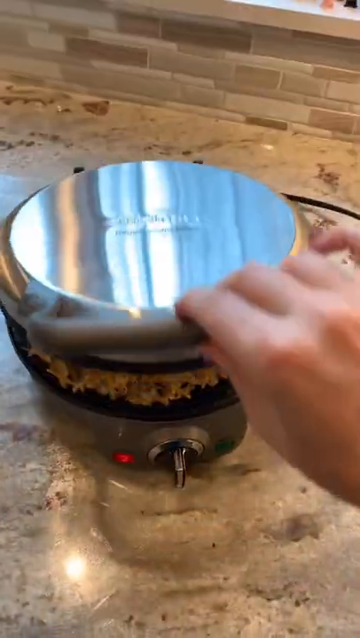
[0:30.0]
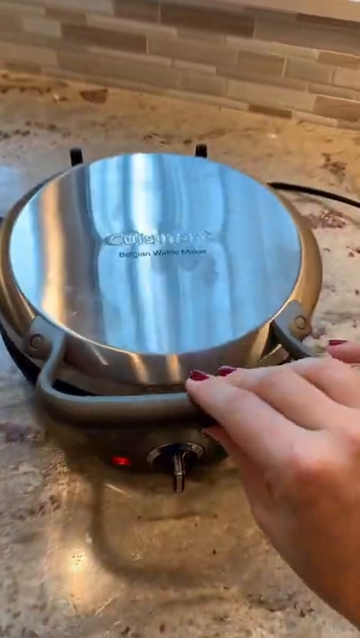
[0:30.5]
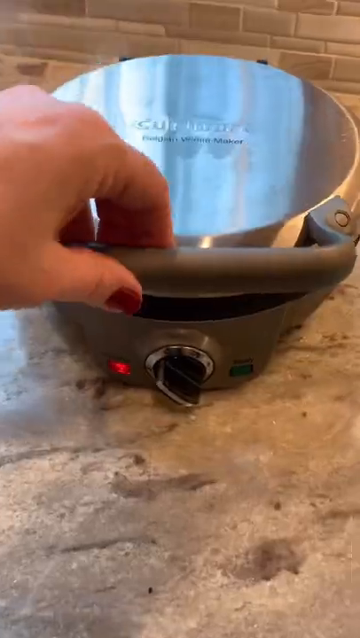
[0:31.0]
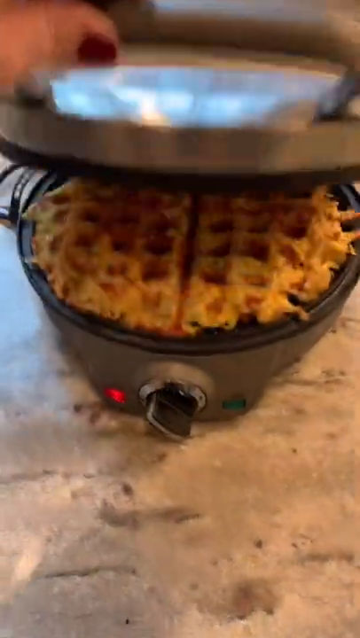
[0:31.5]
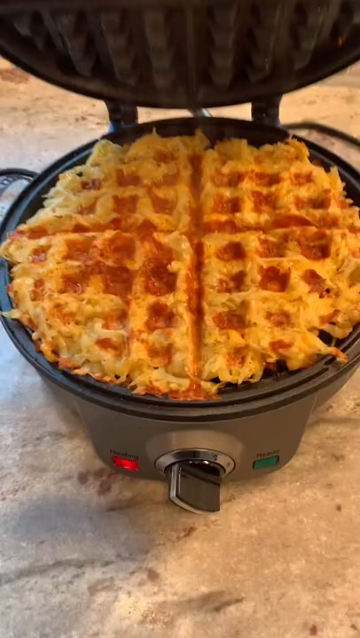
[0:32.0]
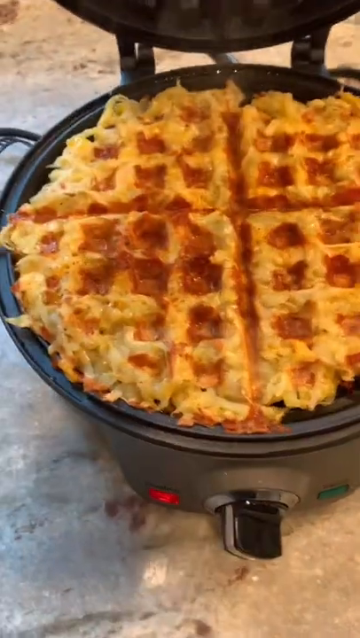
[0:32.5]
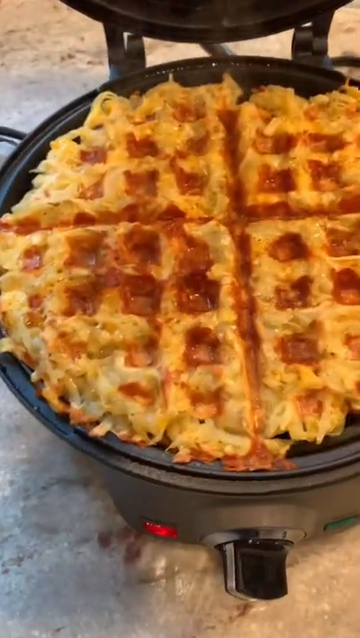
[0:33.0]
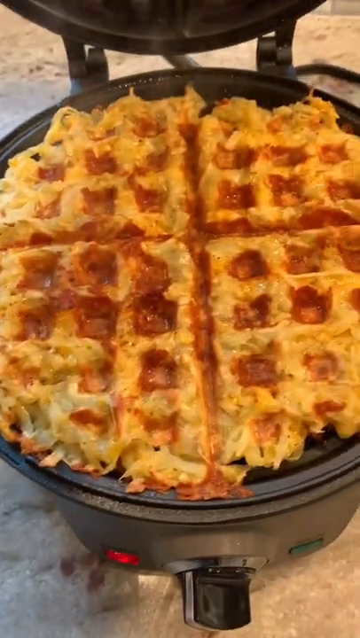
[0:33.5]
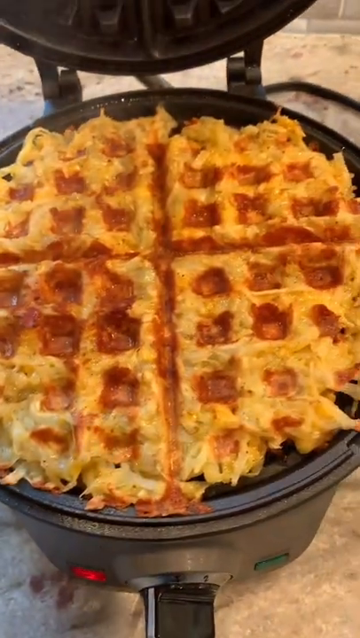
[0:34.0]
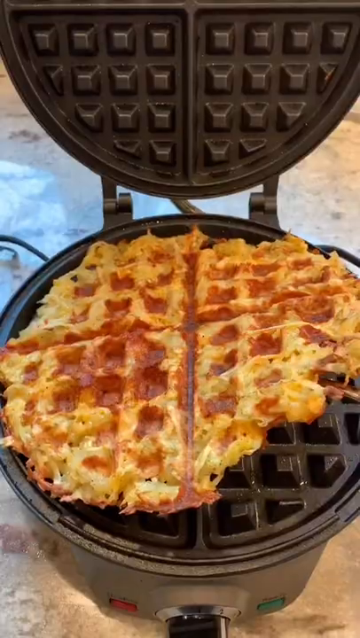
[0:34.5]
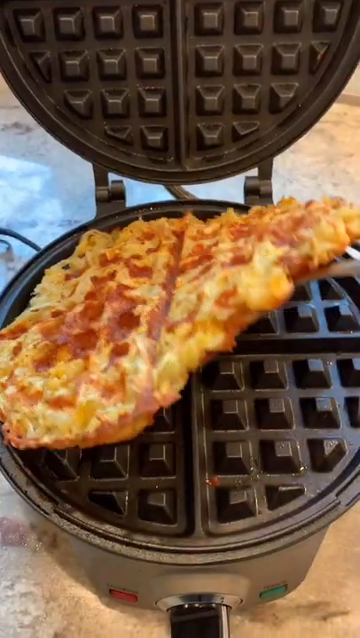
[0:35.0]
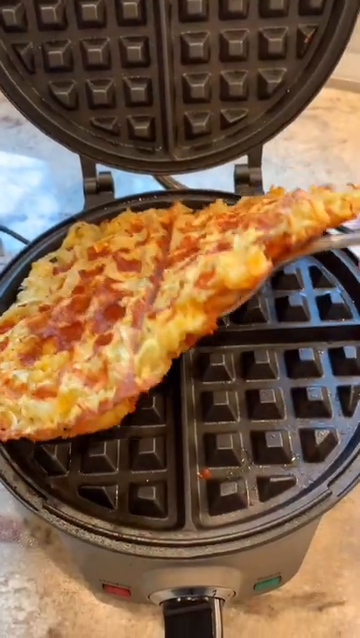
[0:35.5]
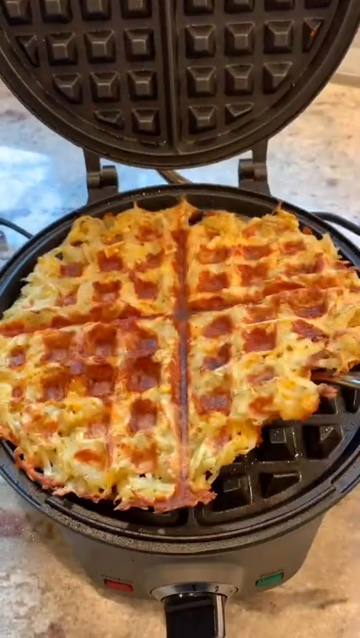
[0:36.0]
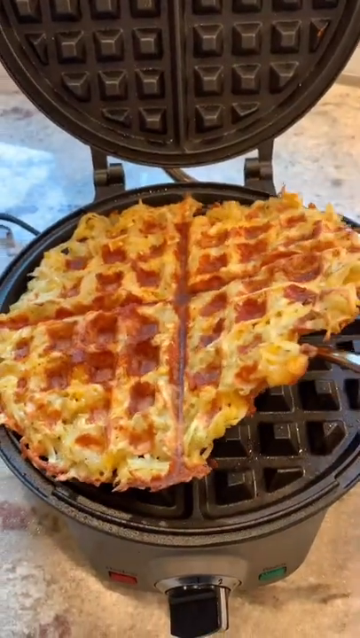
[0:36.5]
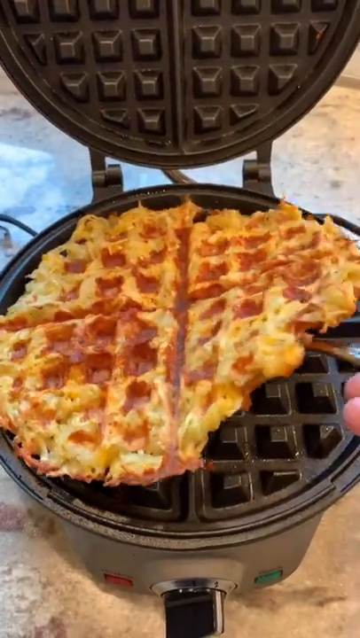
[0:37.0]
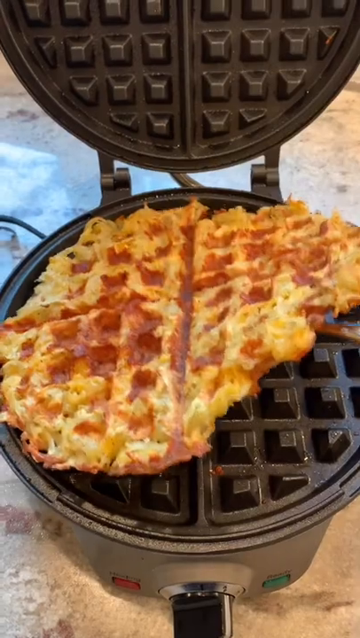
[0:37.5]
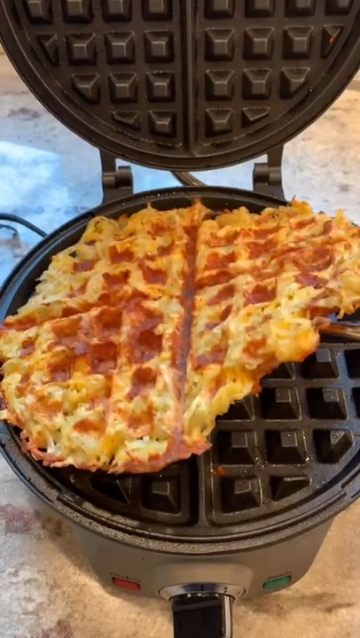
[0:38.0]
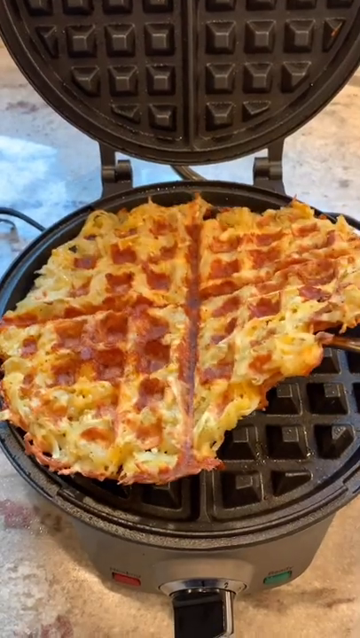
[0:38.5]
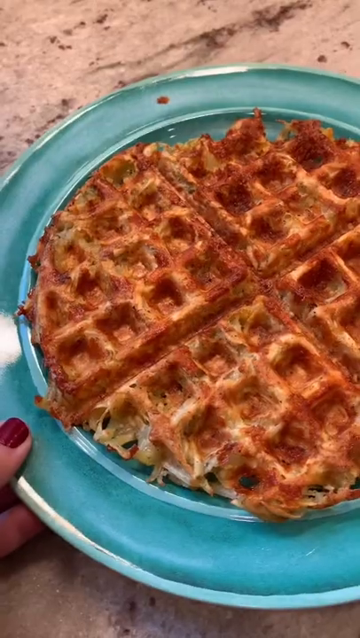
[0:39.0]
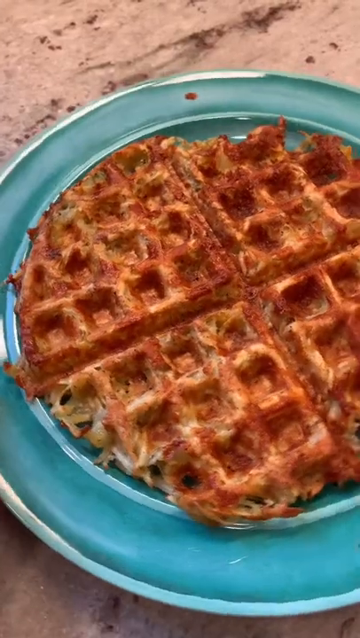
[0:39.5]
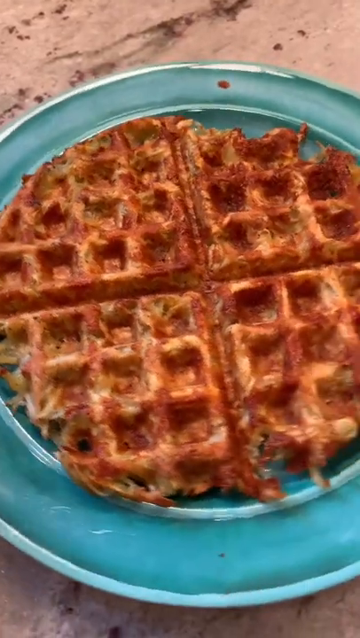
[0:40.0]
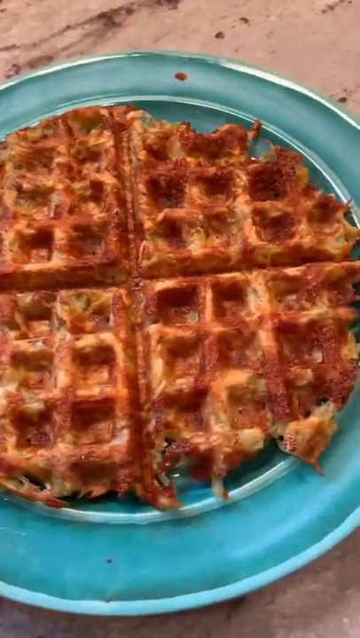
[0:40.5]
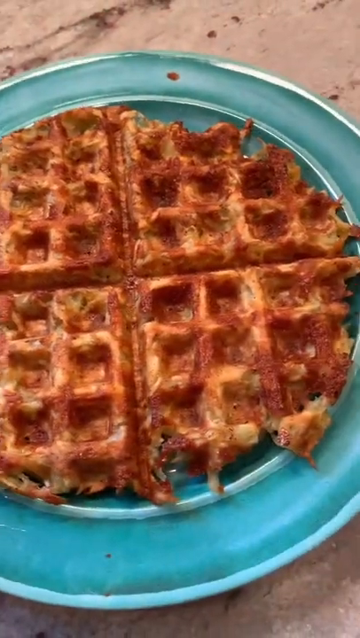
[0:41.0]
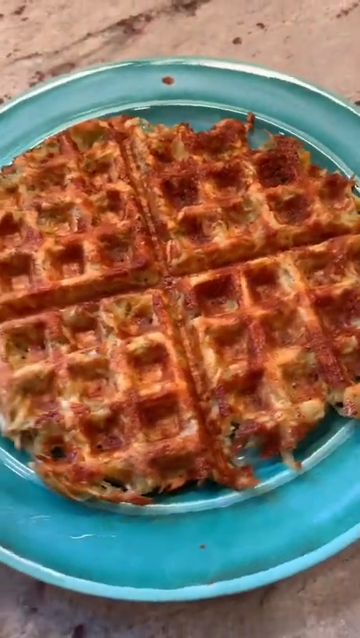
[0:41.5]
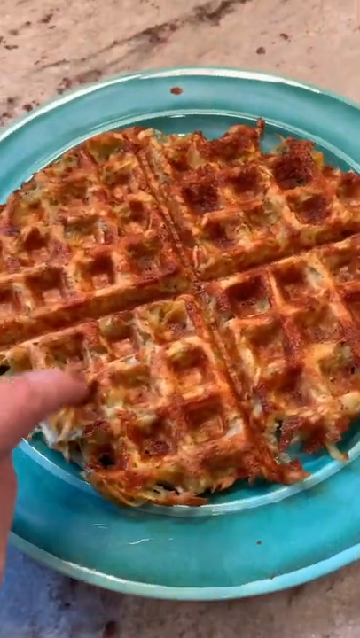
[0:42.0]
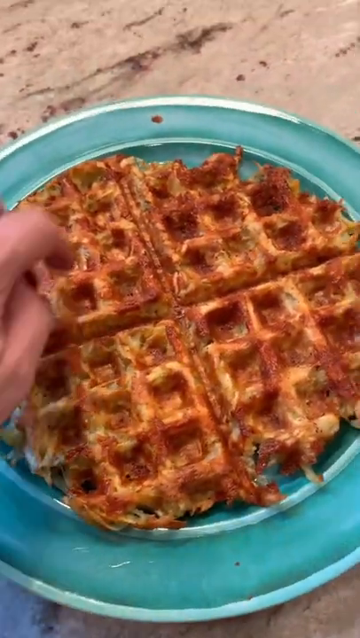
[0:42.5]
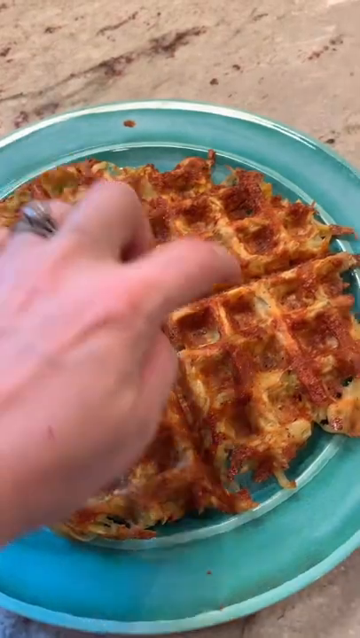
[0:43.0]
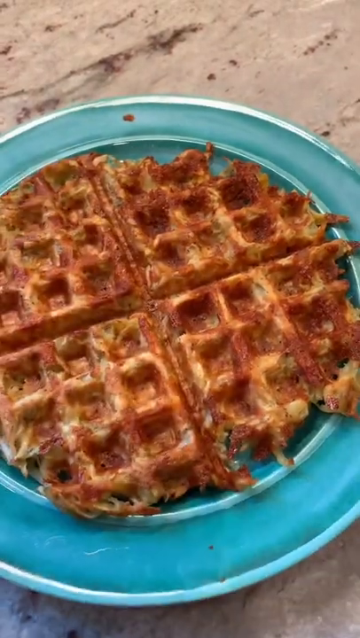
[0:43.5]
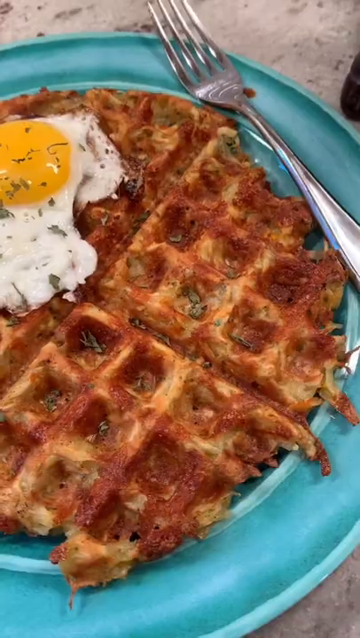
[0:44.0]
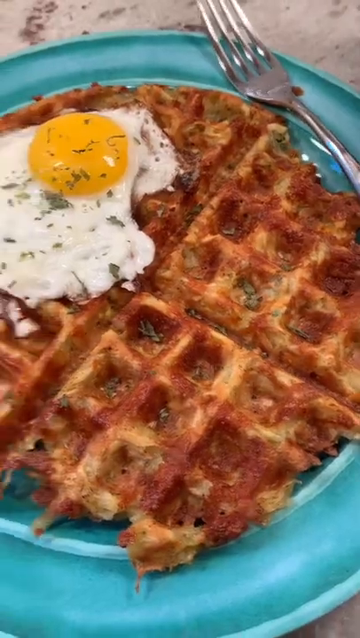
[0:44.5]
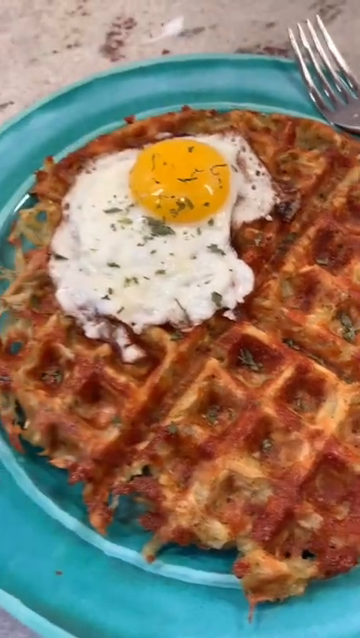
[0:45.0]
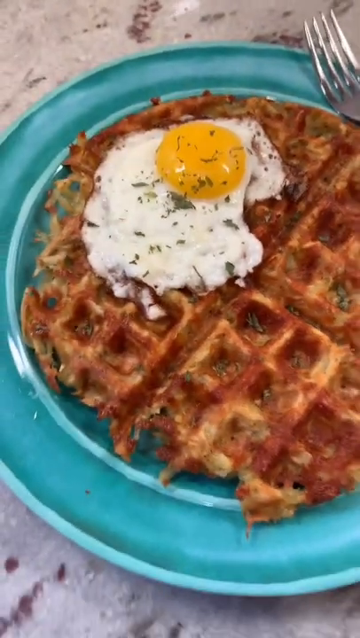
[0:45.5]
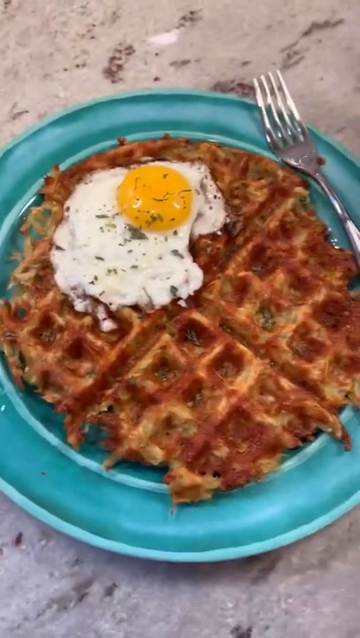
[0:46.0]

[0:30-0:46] The finished waffle is taken out of the waffle machine. It looks a bit crusty in places. It is presented with an egg and plated on a plastic plate.